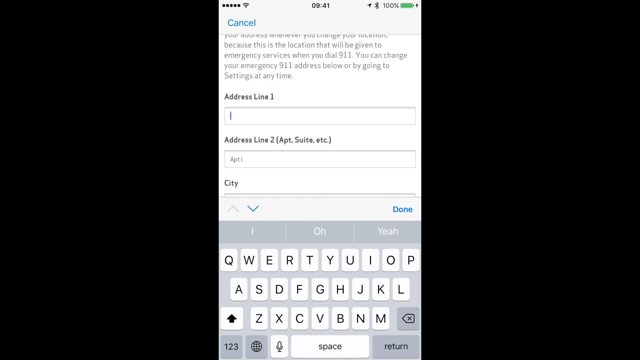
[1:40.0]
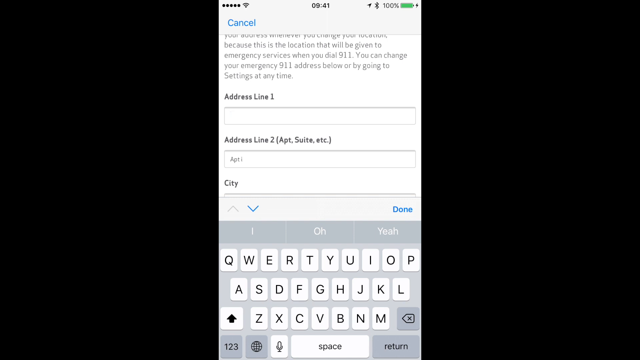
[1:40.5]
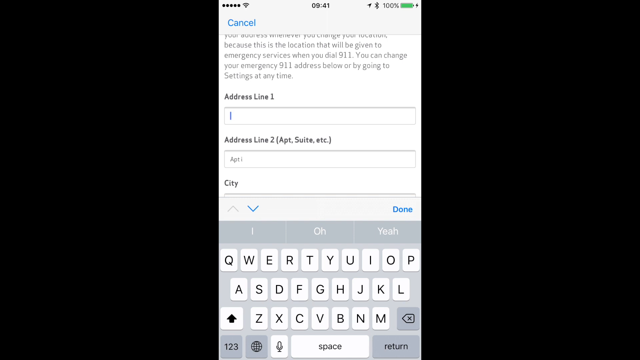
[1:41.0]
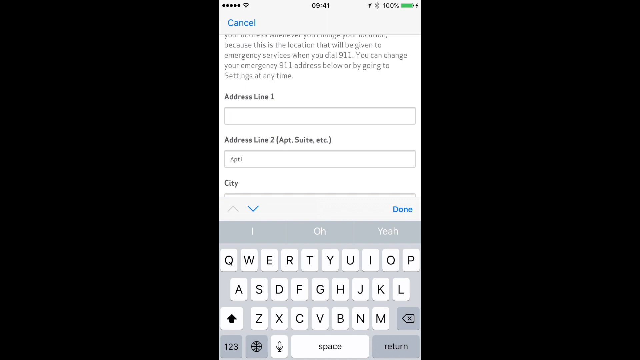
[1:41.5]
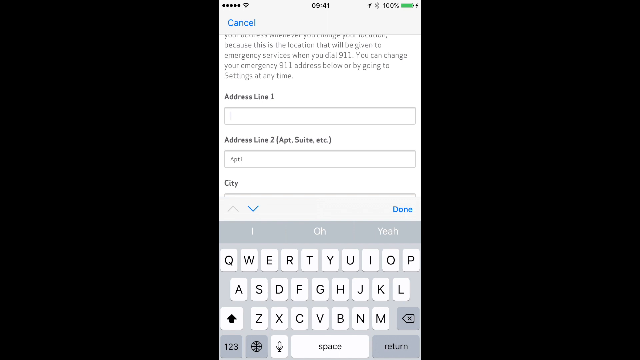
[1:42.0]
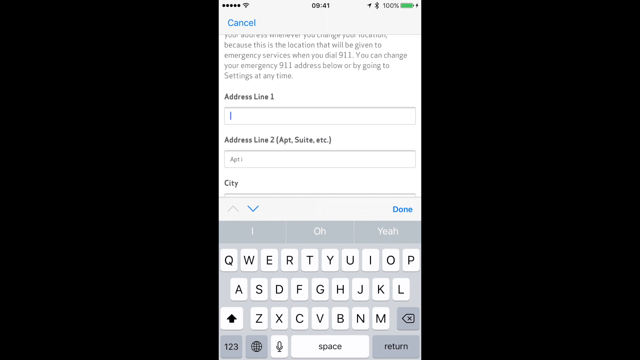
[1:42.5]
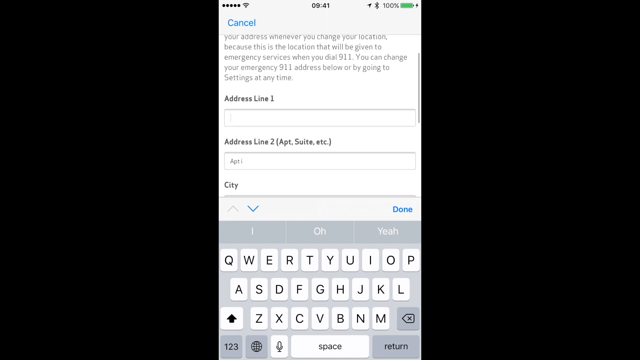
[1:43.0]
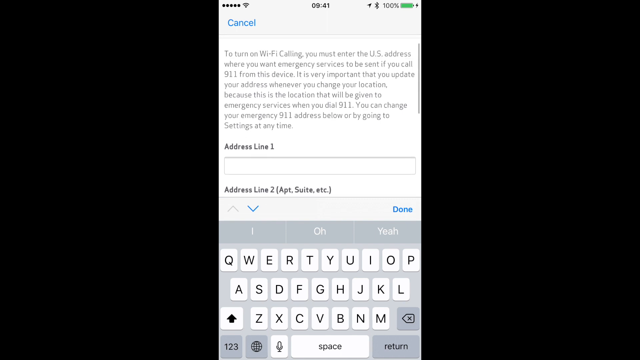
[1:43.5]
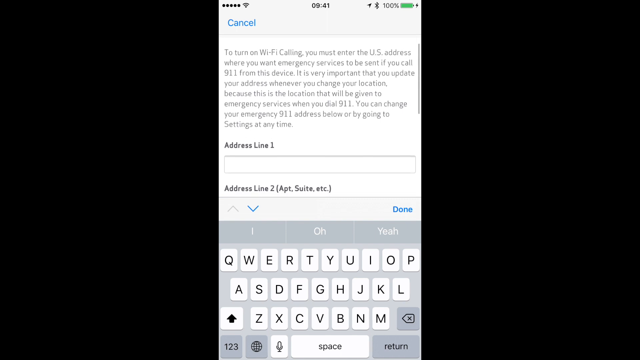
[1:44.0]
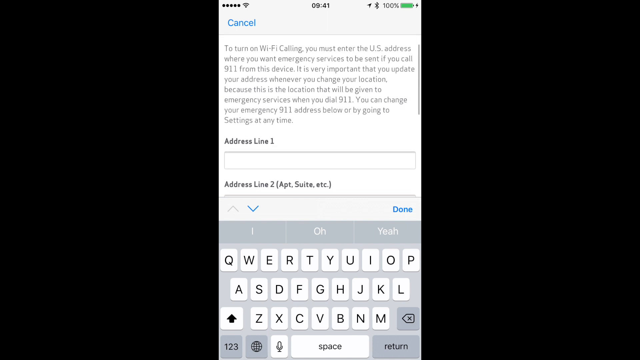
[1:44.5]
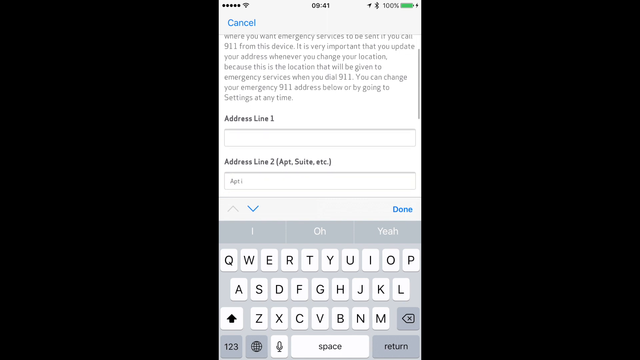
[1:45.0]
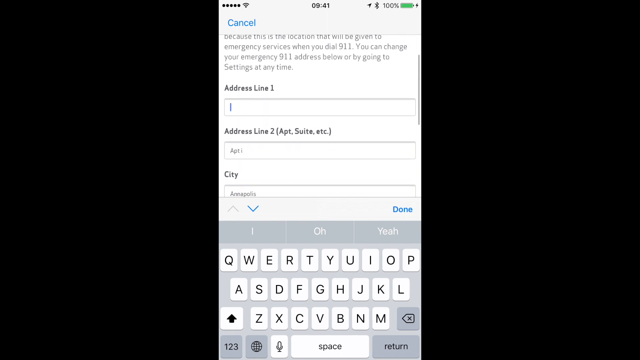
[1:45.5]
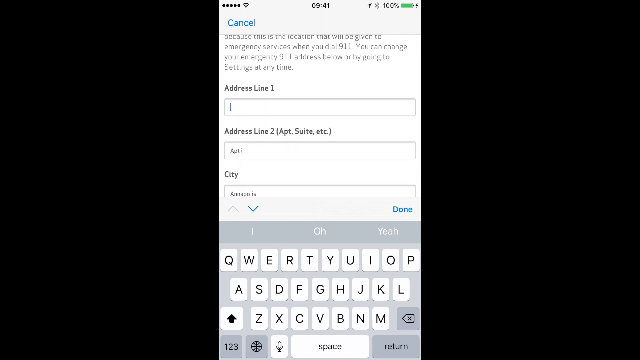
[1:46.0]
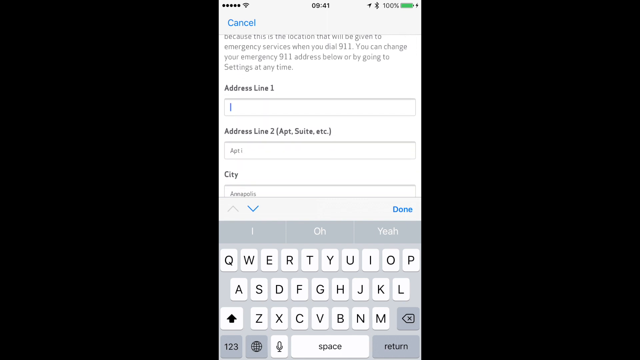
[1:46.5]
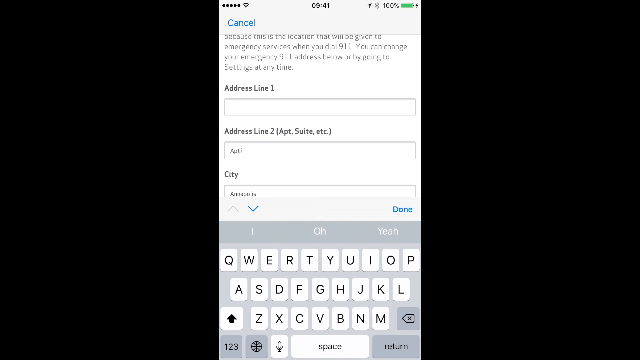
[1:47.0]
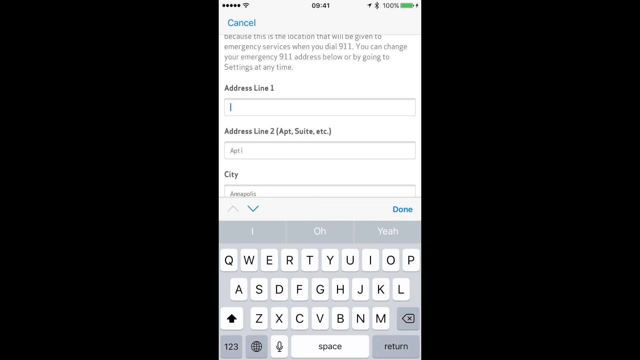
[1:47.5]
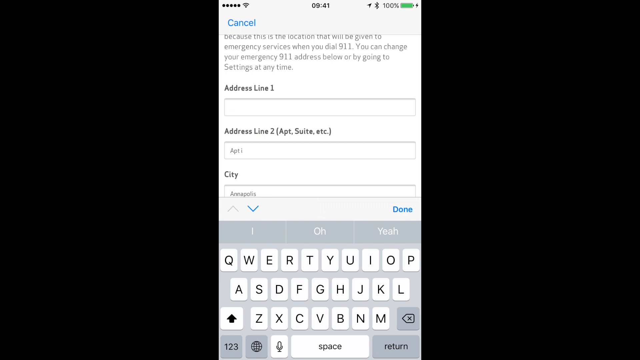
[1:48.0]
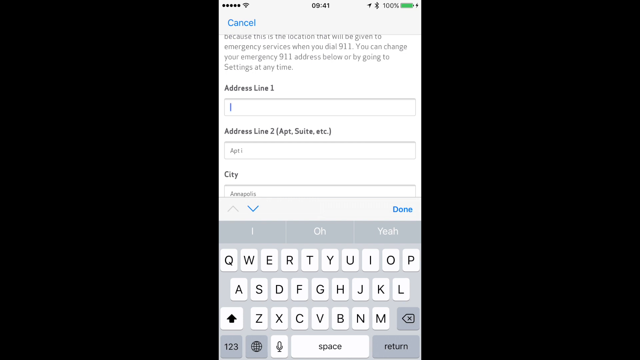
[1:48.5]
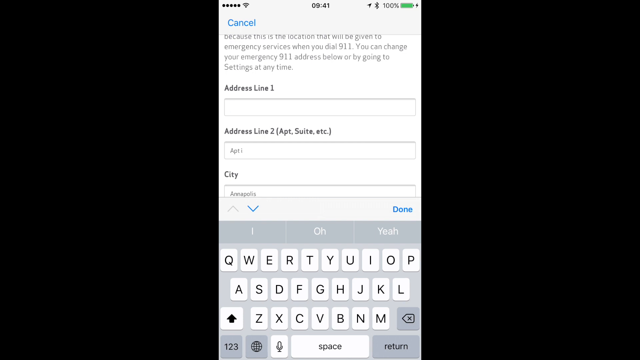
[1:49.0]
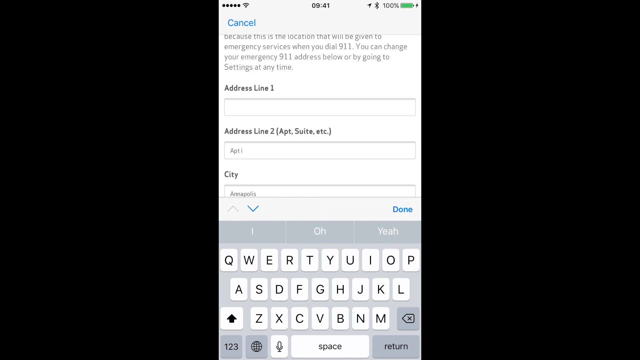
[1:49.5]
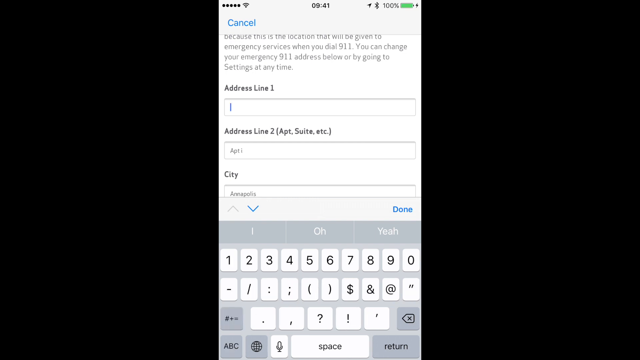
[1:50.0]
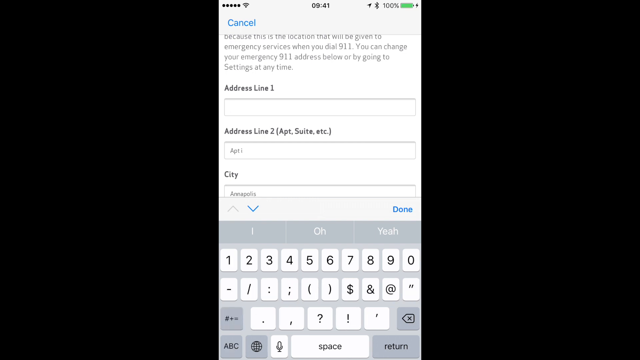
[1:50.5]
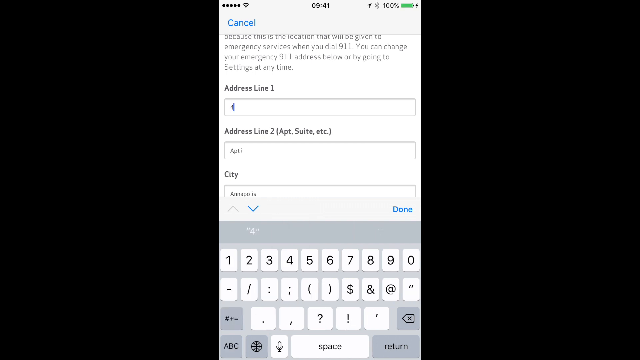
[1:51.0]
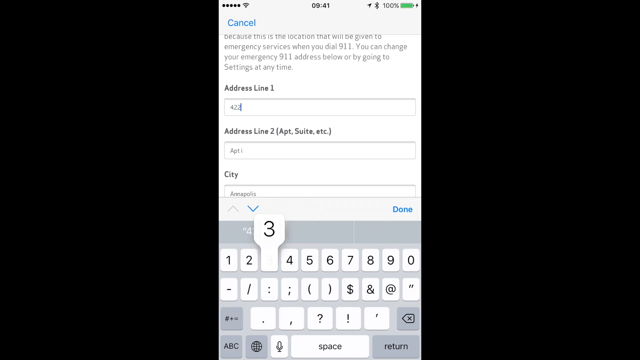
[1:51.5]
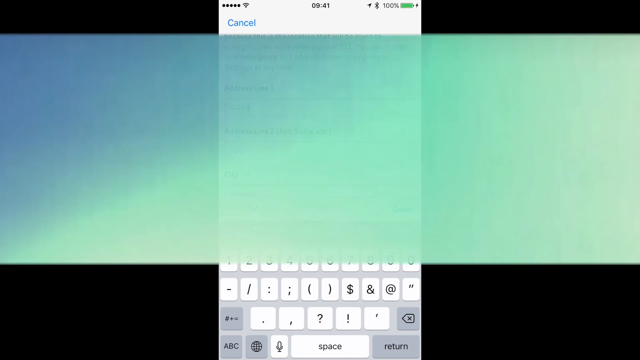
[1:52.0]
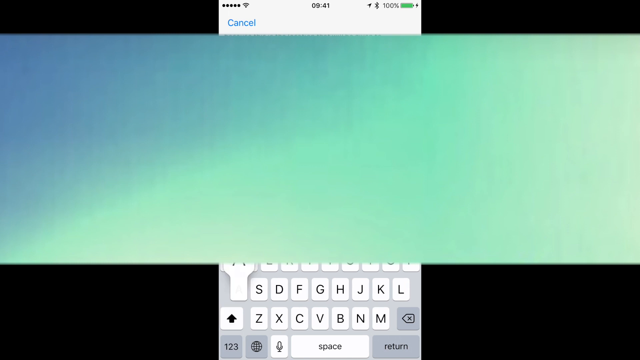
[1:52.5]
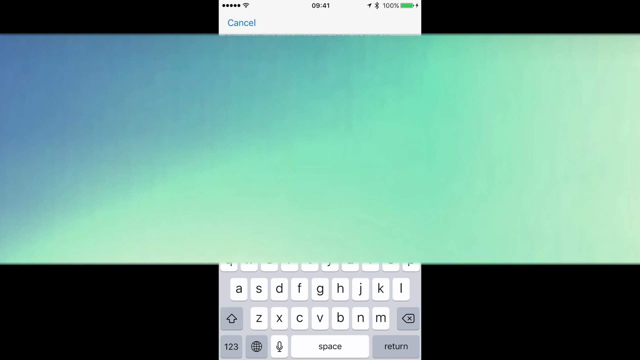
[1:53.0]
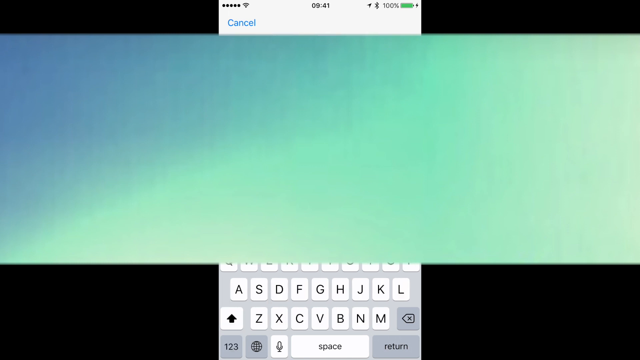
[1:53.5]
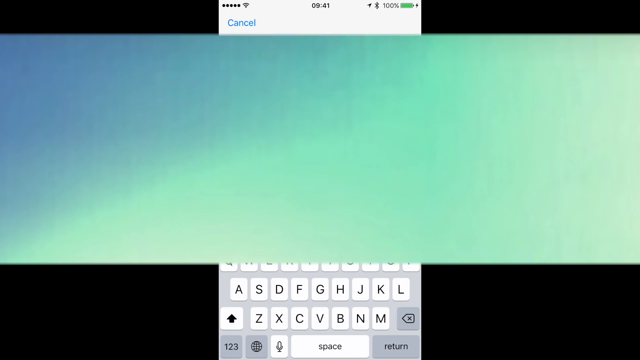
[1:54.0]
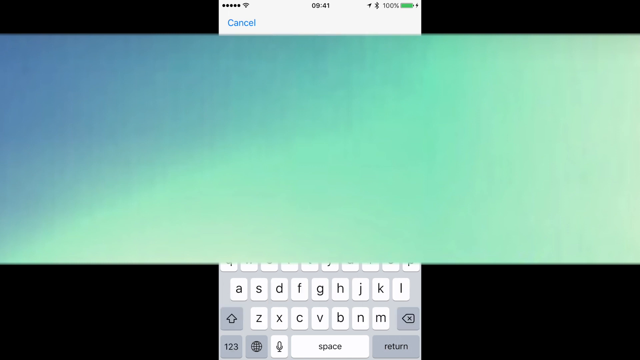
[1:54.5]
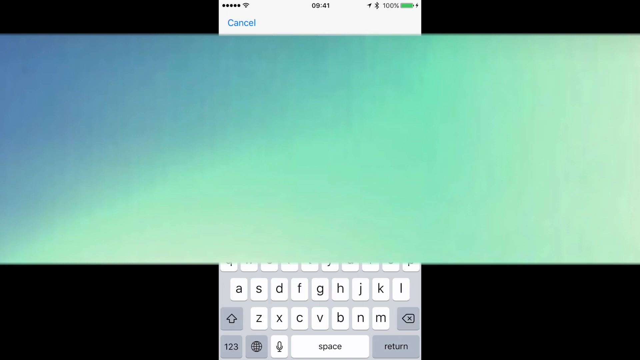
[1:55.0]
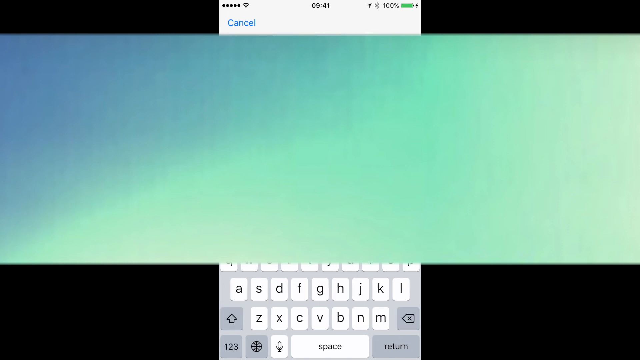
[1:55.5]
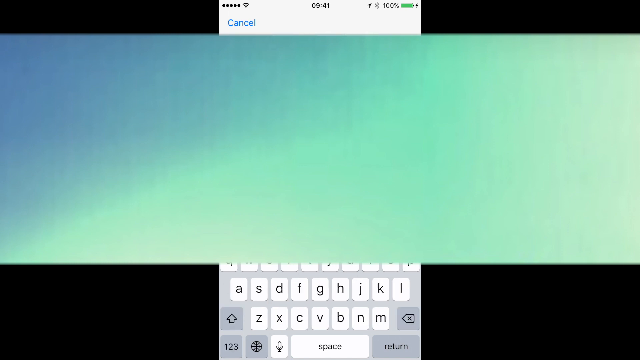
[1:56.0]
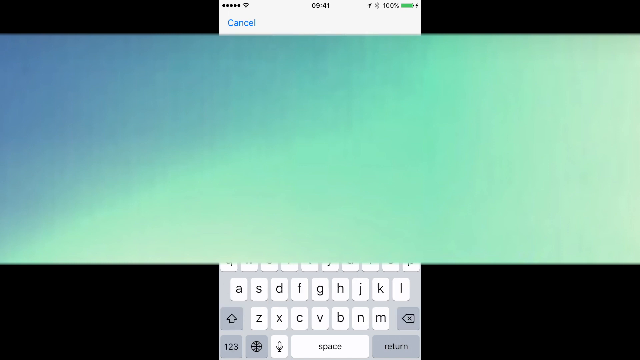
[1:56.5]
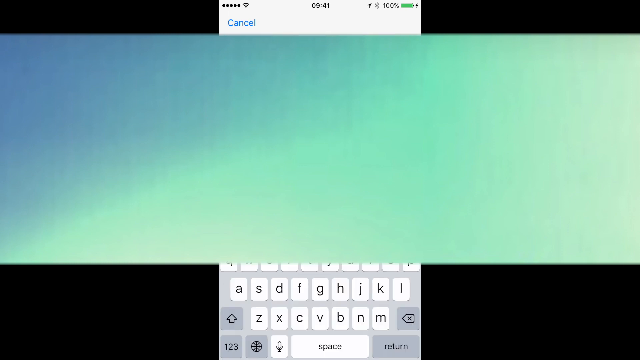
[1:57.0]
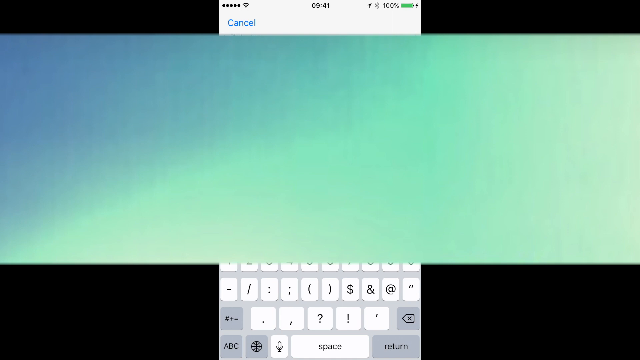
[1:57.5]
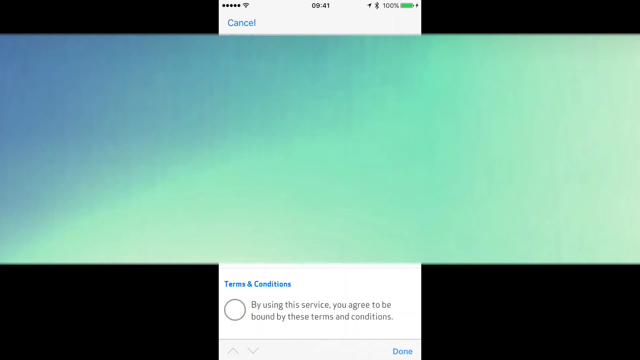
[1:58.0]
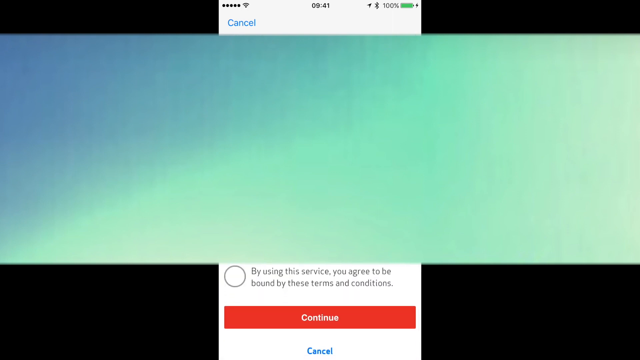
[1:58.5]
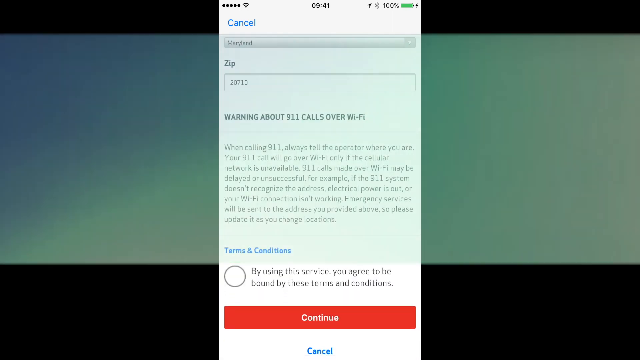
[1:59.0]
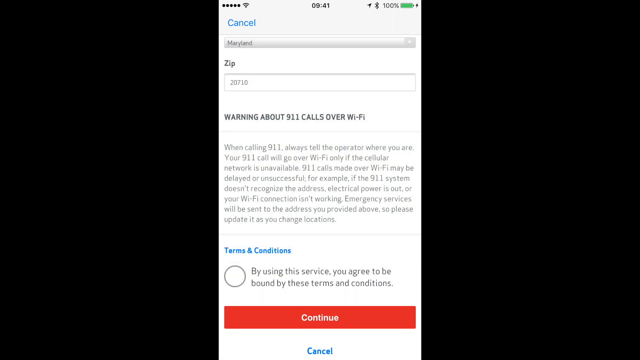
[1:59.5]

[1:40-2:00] The mobile device's screen is in the direct center of the black background. A blue cancel button is in the top left of the screen, followed by text about emergency services and, underneath, fields for address line, address line two and city. Address line one is selected, with the text cursor flashing inside its box, and the keyboard with its letters is visible at the bottom of the screen. The screen scrolls up slightly to reveal the complete text about turning on Wi-Fi calling that was previously cut off, then scrolls back down to the address line, where the blue cursor is still flashing. The keypad changes to the numerical pad at the bottom, and the number 4-2-2-3 is entered before a privacy screen appears, blocking the information, while several keys are still seen being pressed at the bottom since the keypad is not blocked off.